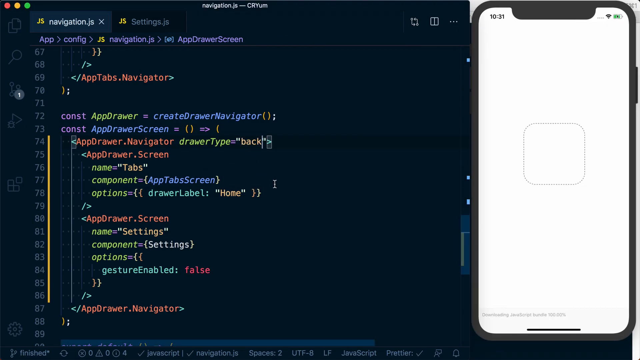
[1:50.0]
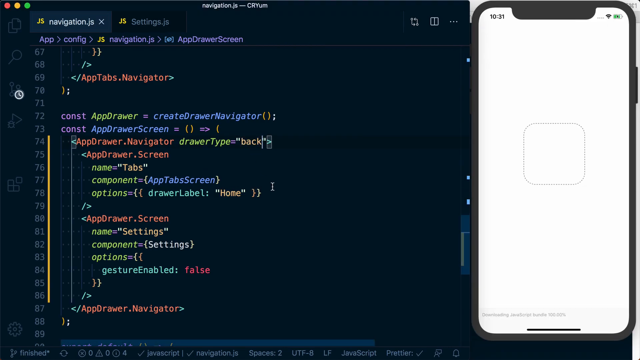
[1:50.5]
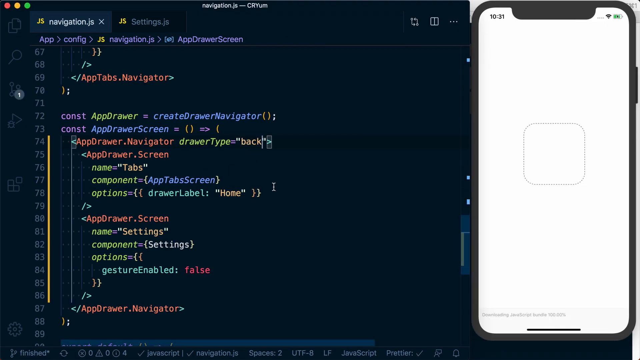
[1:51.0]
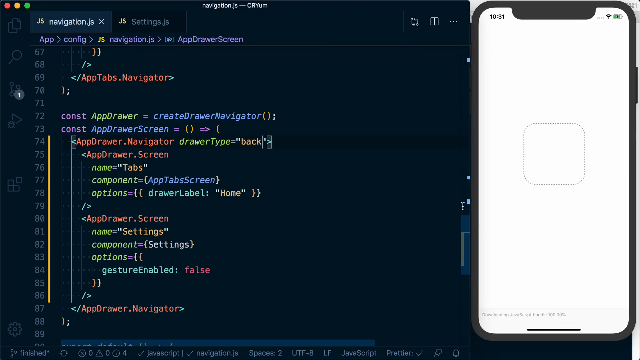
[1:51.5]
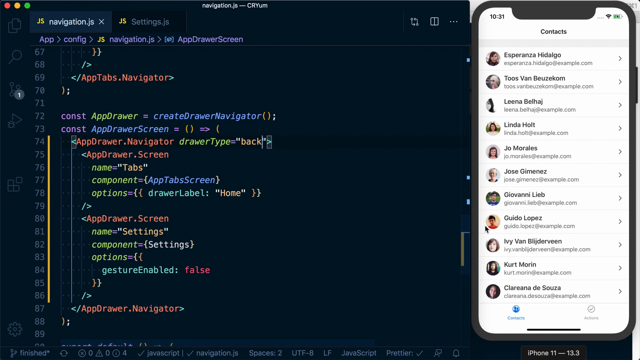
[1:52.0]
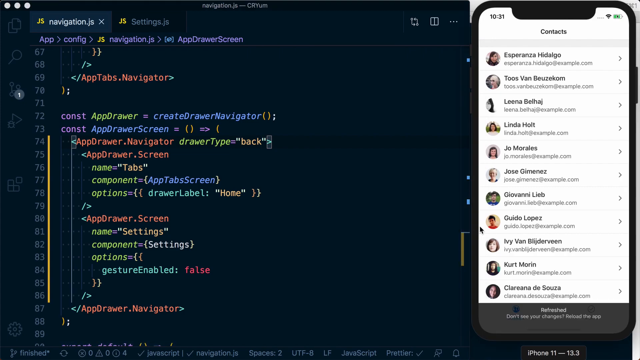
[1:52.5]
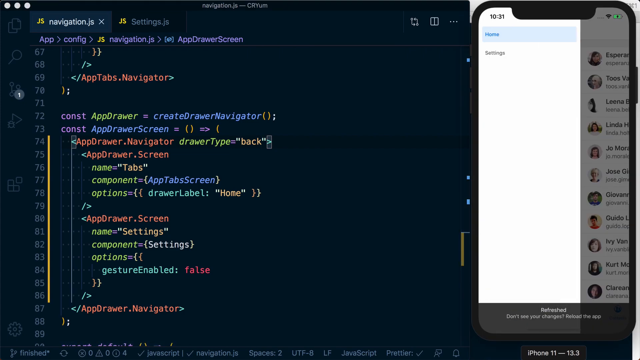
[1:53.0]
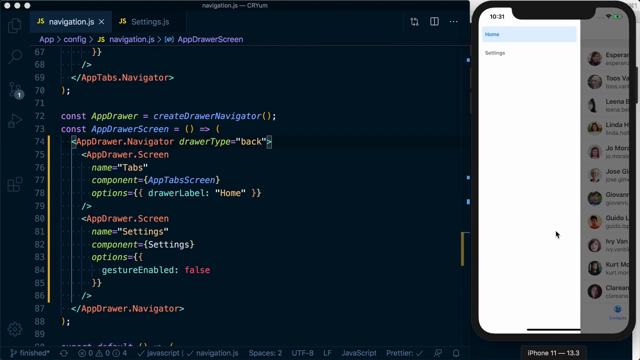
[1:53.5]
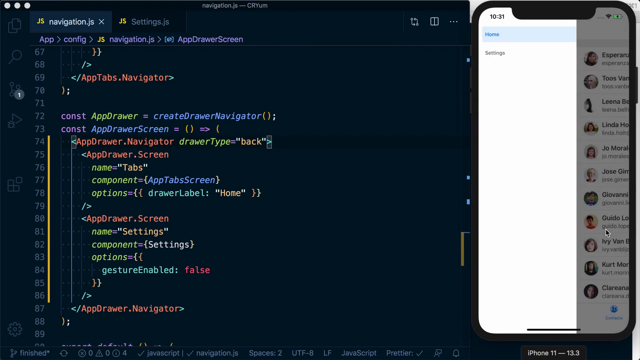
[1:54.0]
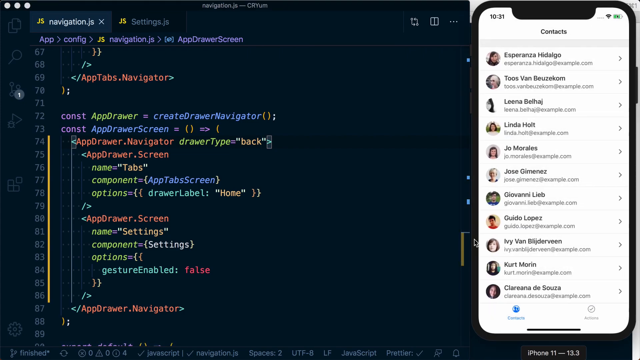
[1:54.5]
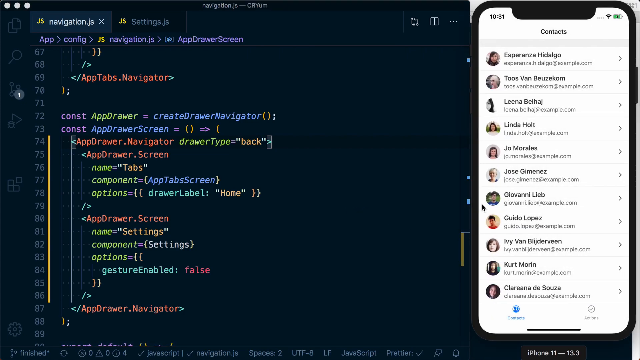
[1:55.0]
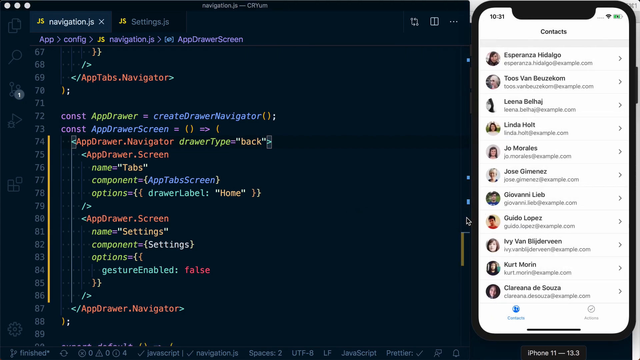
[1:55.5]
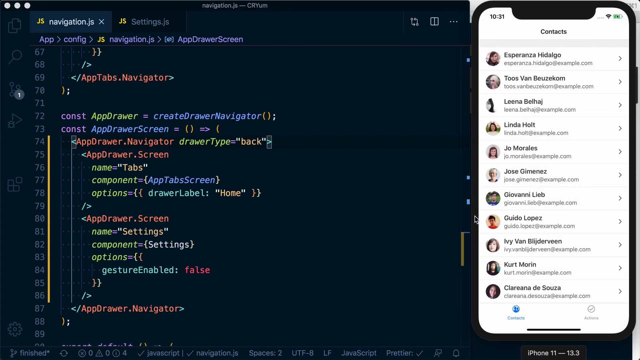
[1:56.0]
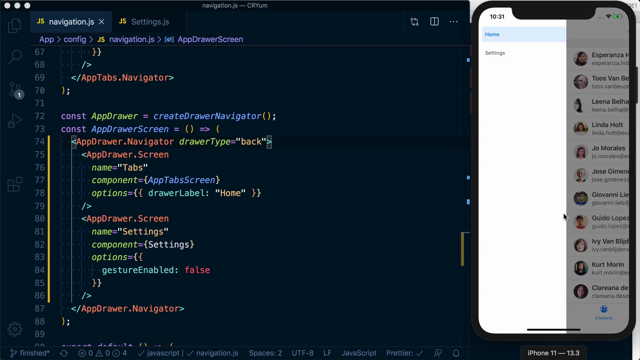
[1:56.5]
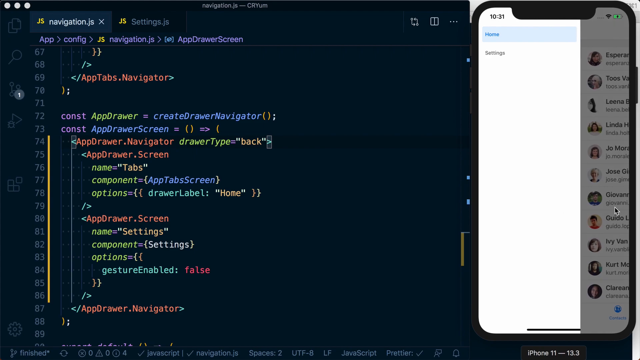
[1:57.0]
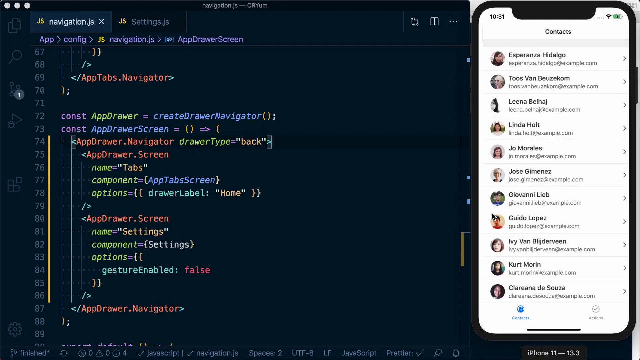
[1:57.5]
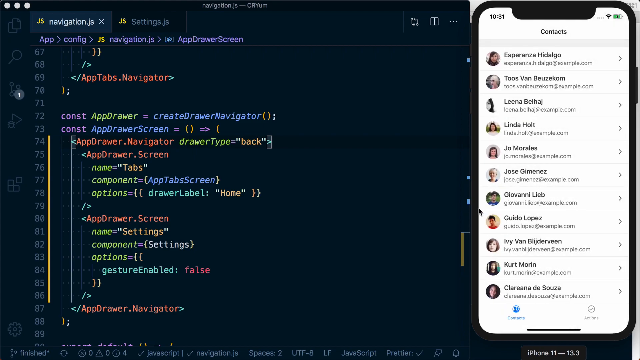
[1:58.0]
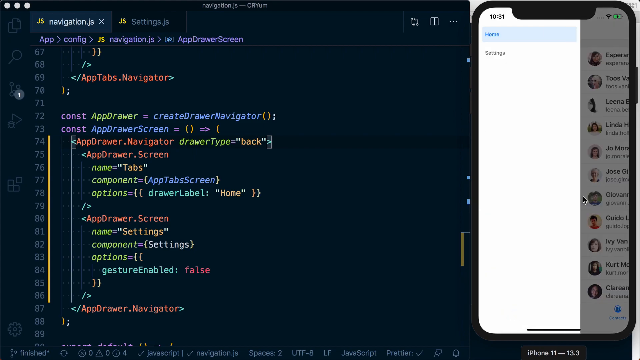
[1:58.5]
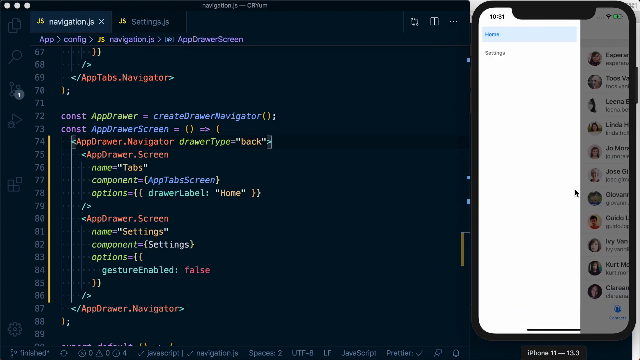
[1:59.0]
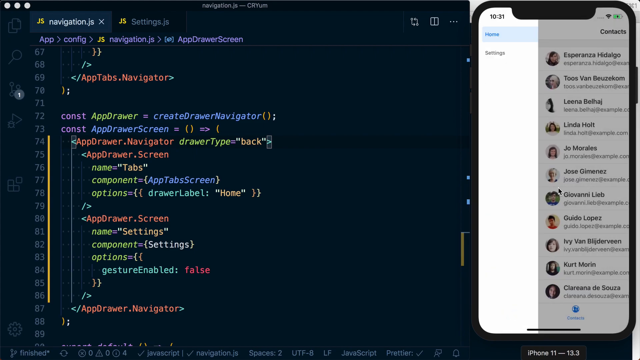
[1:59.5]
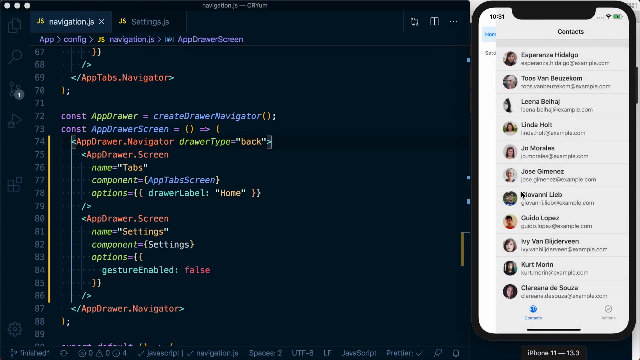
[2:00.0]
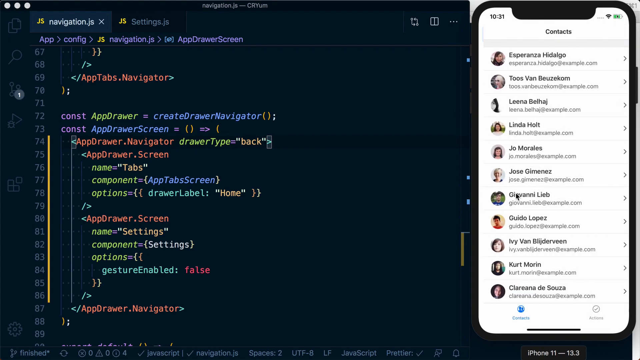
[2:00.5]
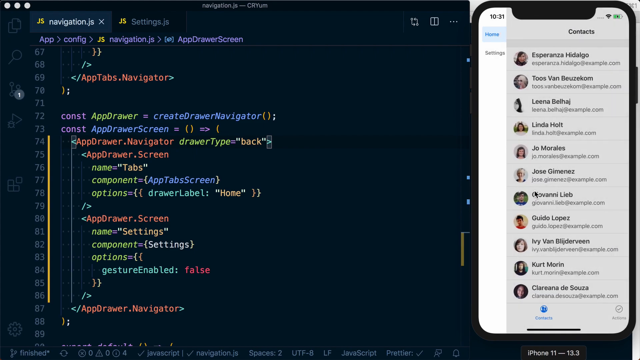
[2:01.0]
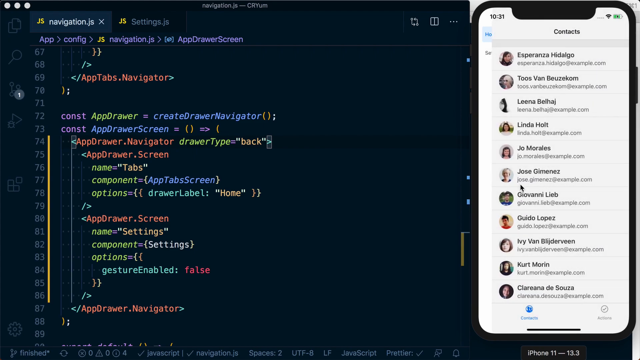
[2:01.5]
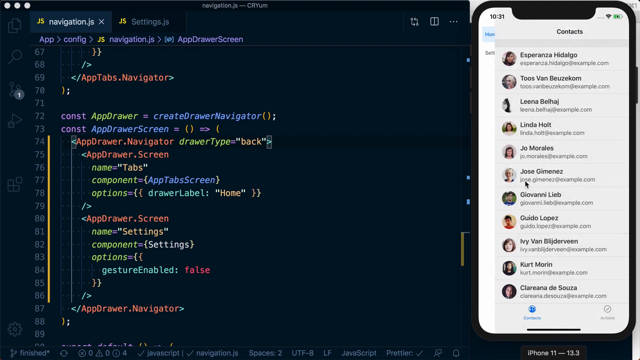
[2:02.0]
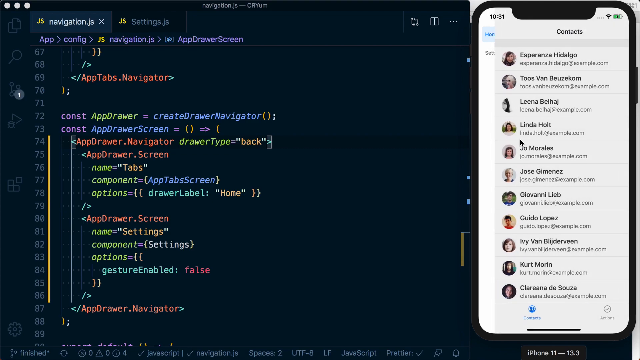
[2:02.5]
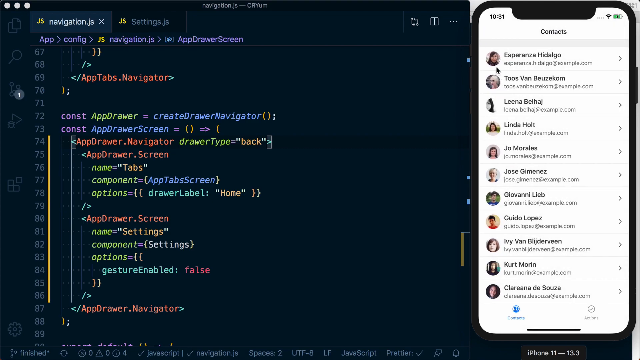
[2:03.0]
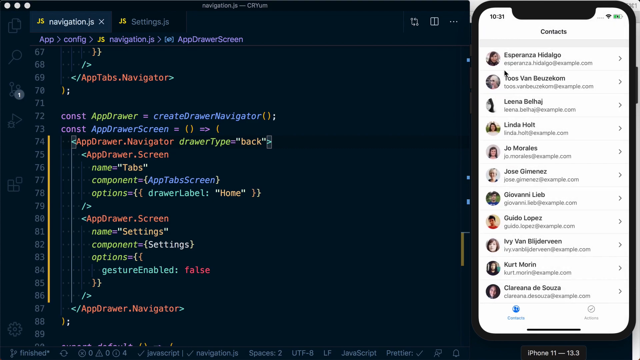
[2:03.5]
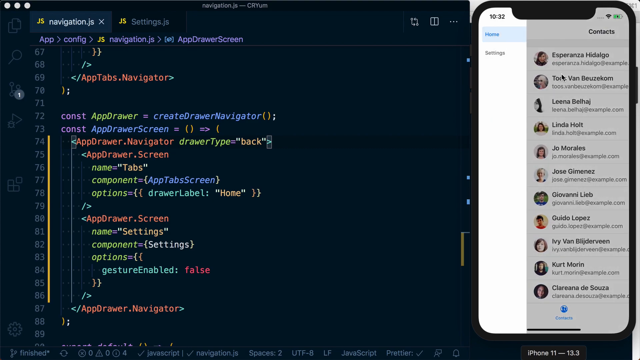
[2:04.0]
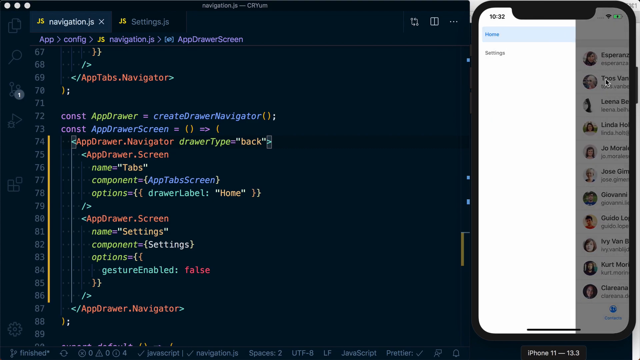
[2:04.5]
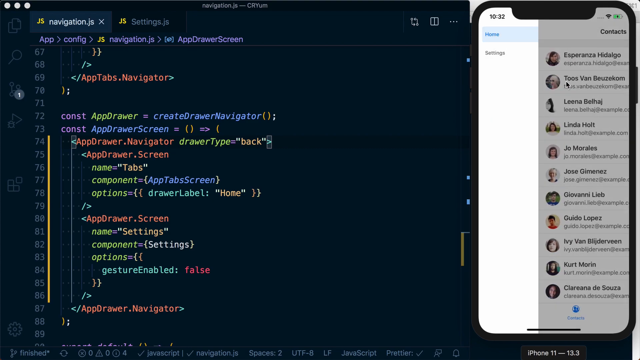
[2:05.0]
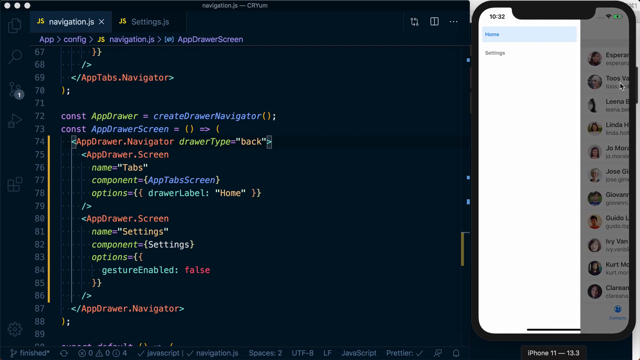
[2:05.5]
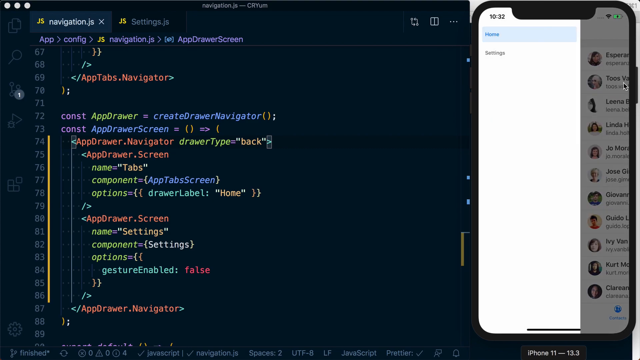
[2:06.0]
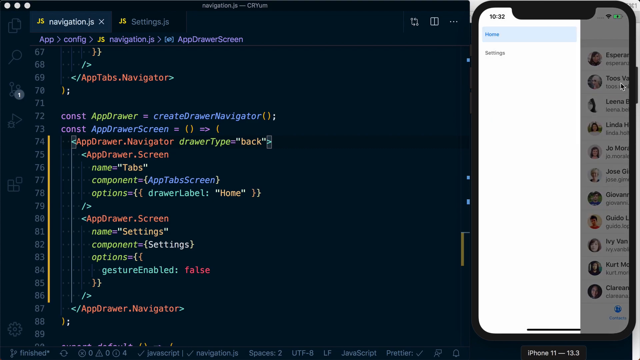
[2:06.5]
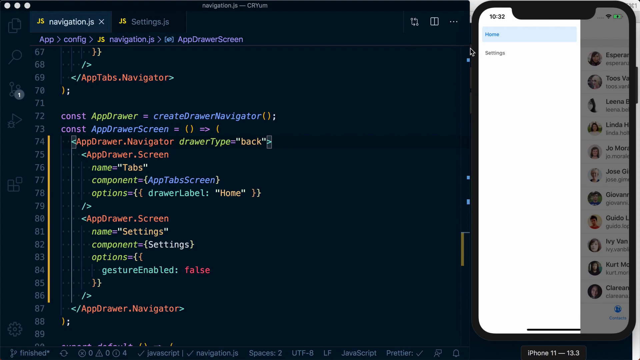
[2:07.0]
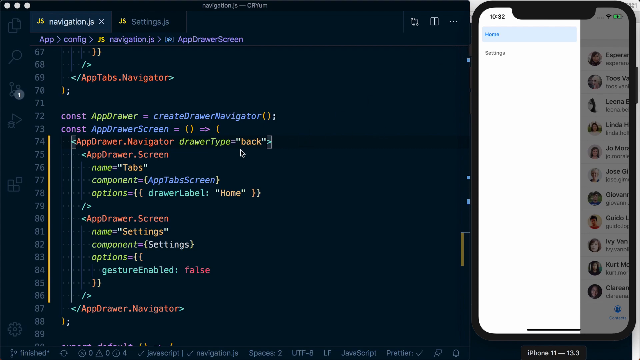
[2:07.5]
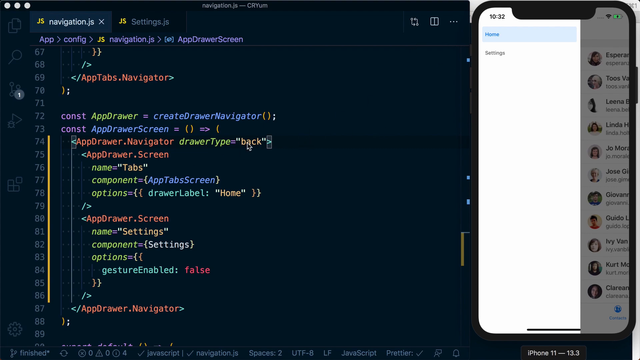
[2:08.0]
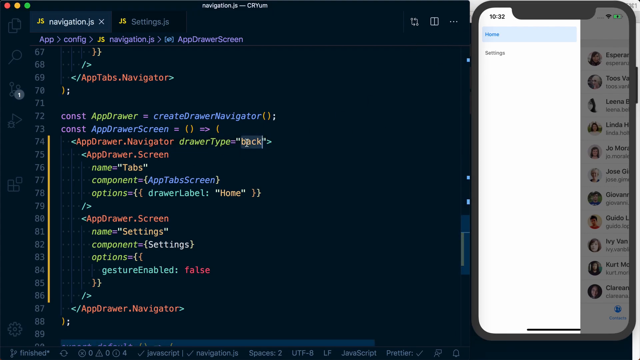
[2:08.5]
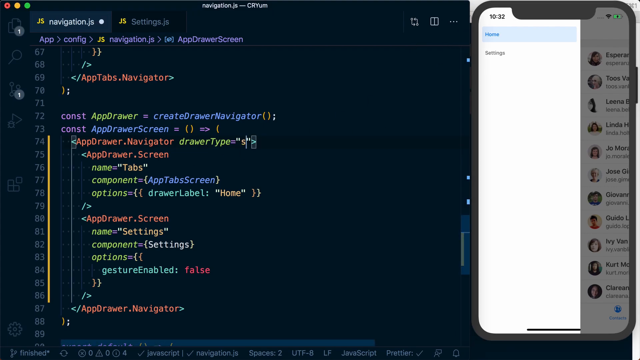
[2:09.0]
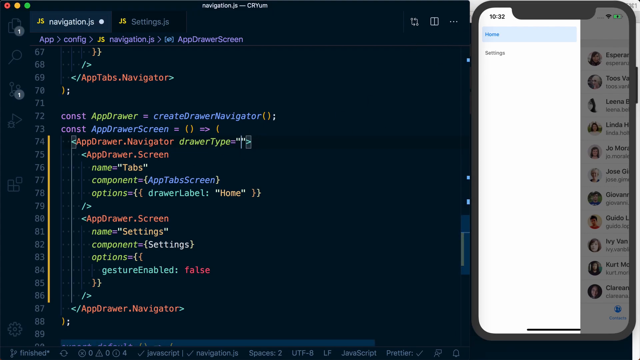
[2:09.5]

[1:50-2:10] Somebody is on a black computer screen reading "navigation.js-cryum" at the very top, working in navigation.js, with another tab called settings next to it that is not selected. There is a lot of code from line 67 down into the 80s, with a black bar covering the bottom, in four colors: purple, orange, lime green and blue. The phone has a white screen with a rectangle with curved sides in the middle. The cursor goes over to it, moves the contacts over and shows home and settings, repeating this about five times while staying on home. The cursor then goes back to the code and starts to erase the word "drawer back", in front of which "app drawer.navigator" appears in orange font.